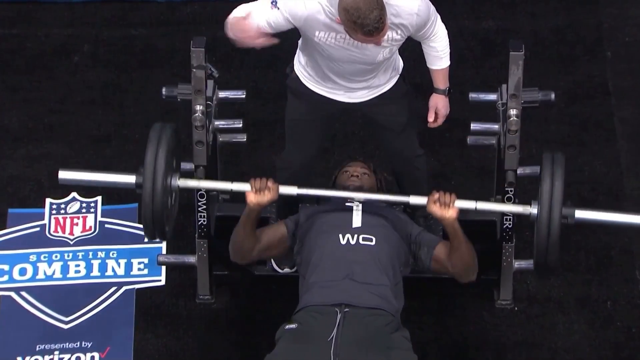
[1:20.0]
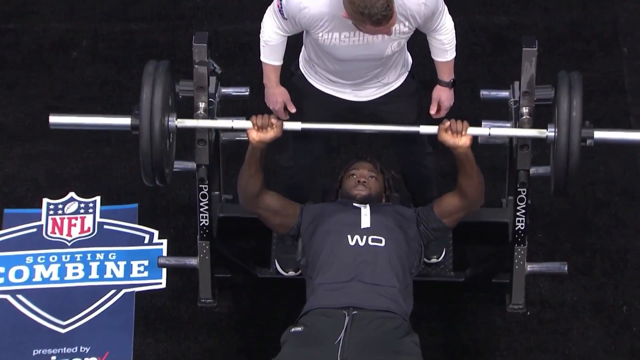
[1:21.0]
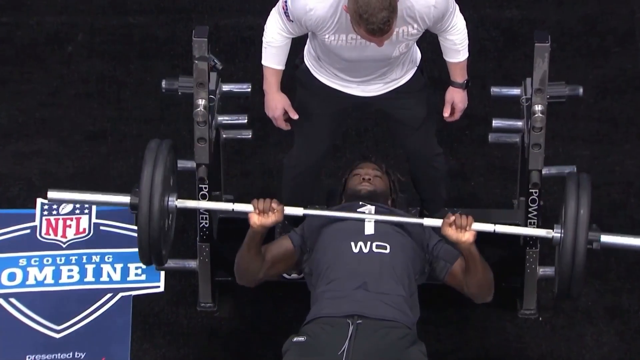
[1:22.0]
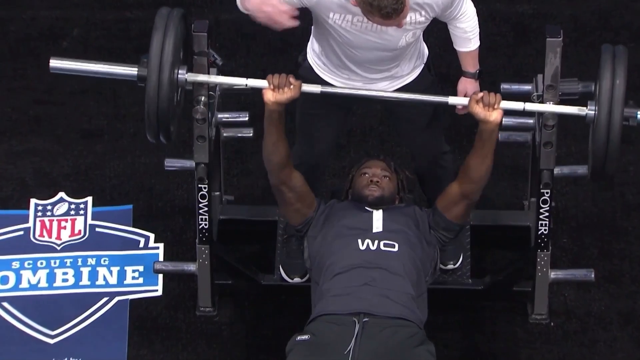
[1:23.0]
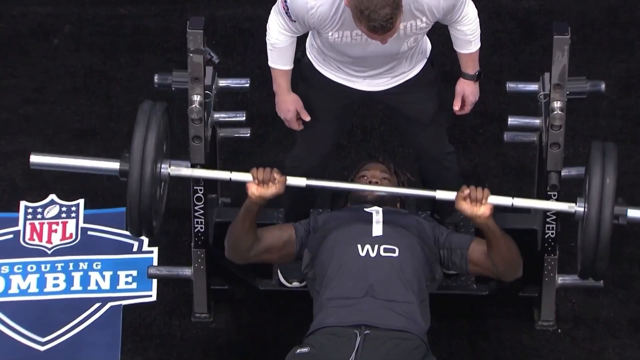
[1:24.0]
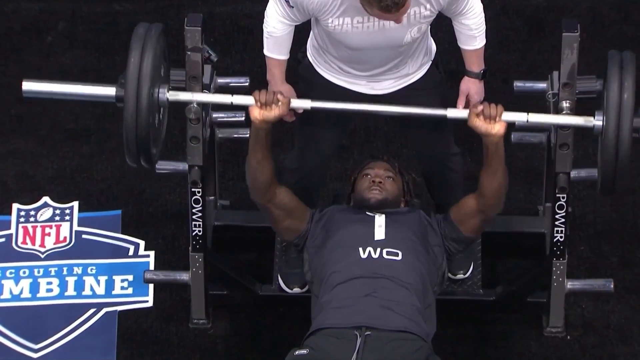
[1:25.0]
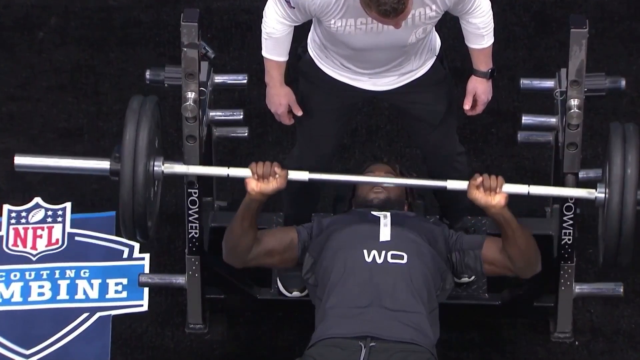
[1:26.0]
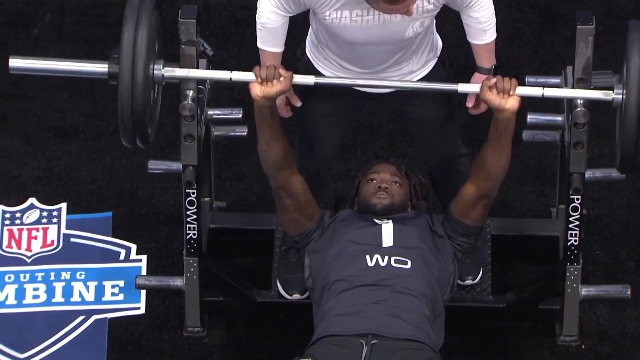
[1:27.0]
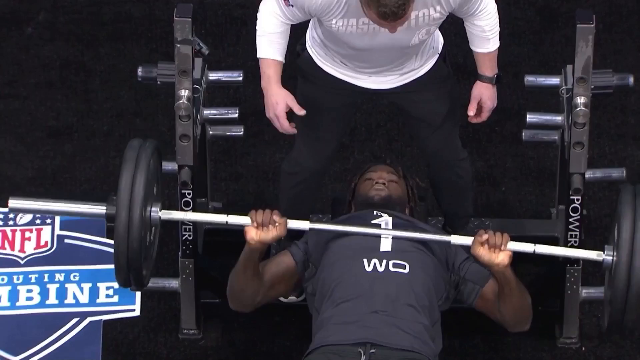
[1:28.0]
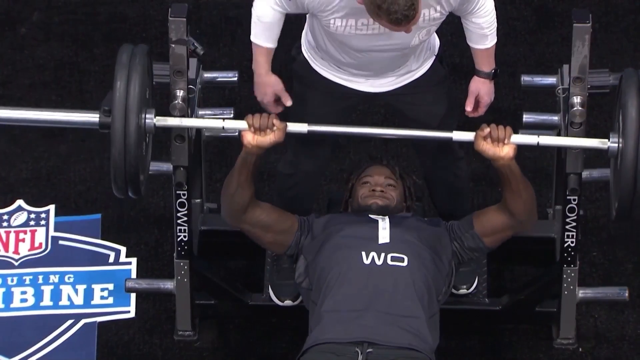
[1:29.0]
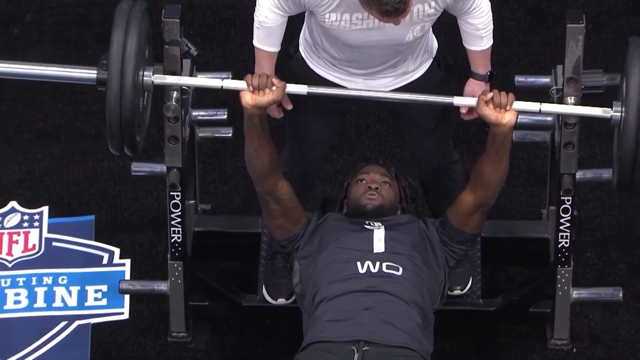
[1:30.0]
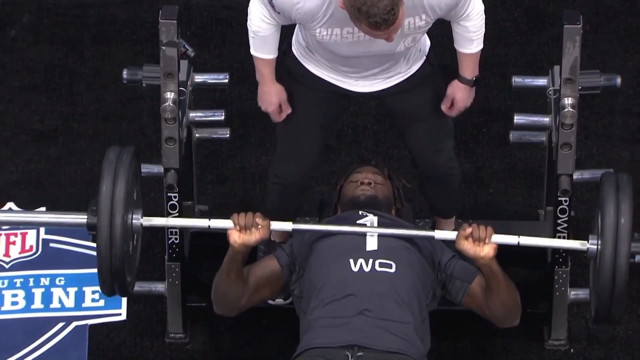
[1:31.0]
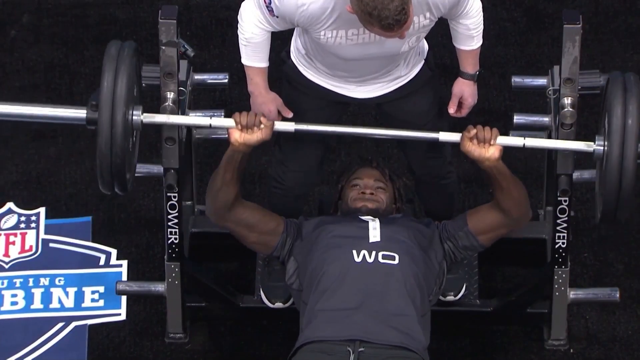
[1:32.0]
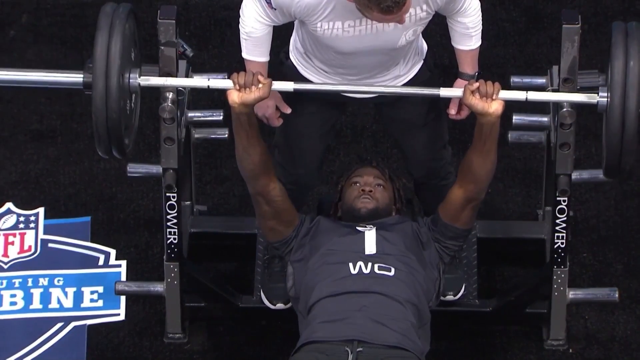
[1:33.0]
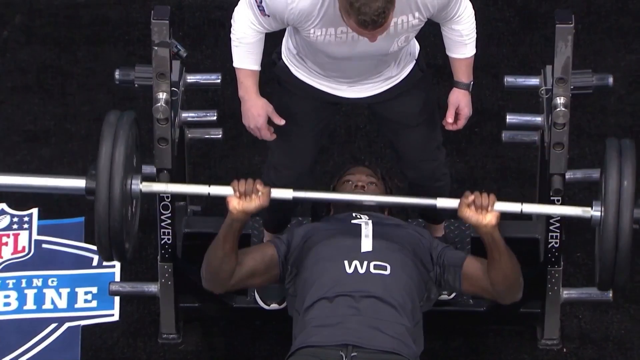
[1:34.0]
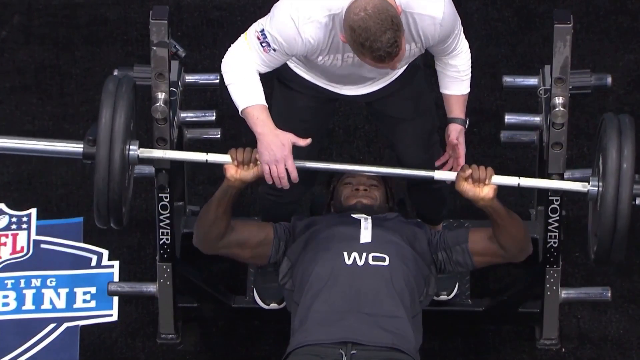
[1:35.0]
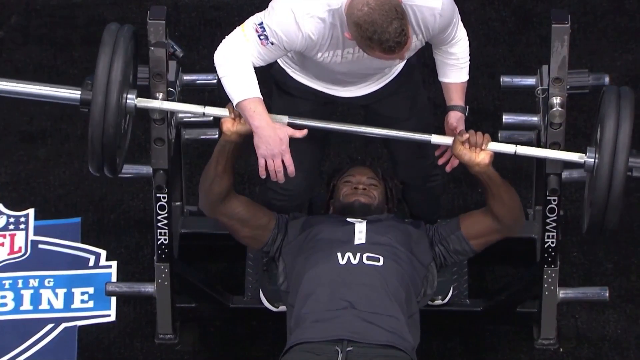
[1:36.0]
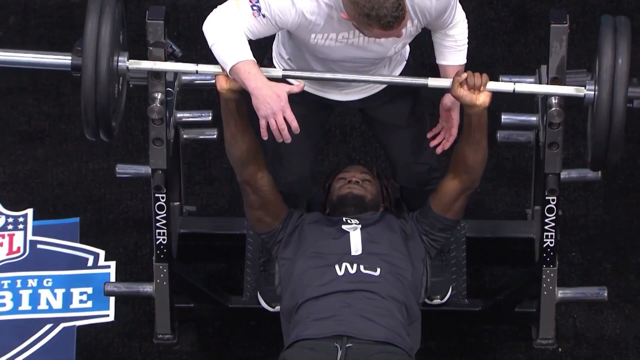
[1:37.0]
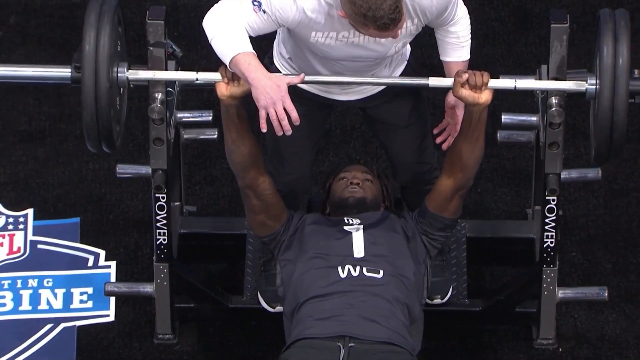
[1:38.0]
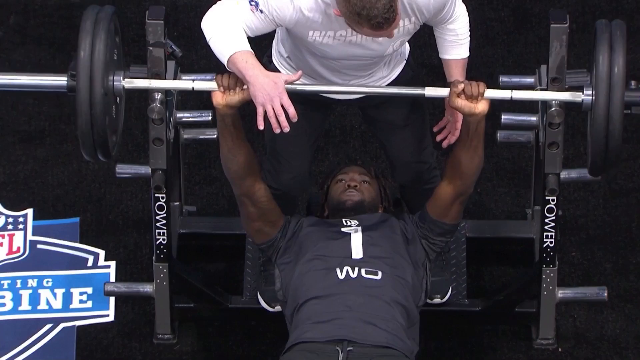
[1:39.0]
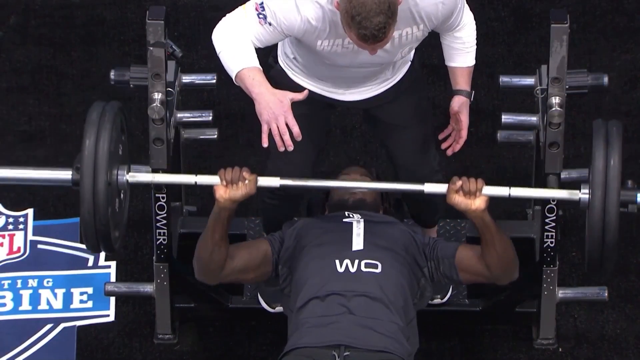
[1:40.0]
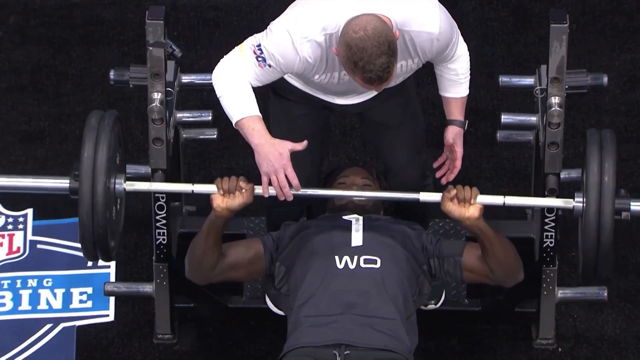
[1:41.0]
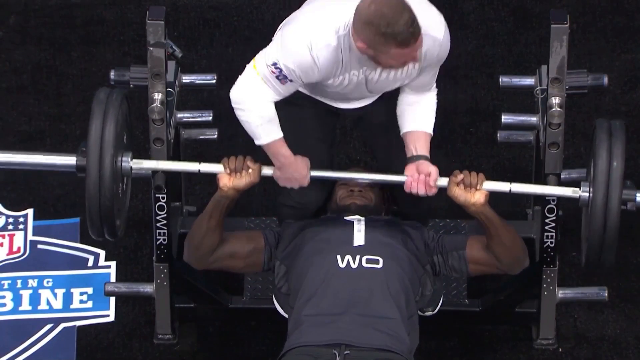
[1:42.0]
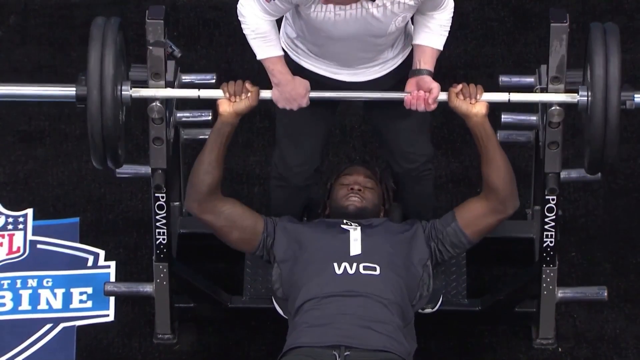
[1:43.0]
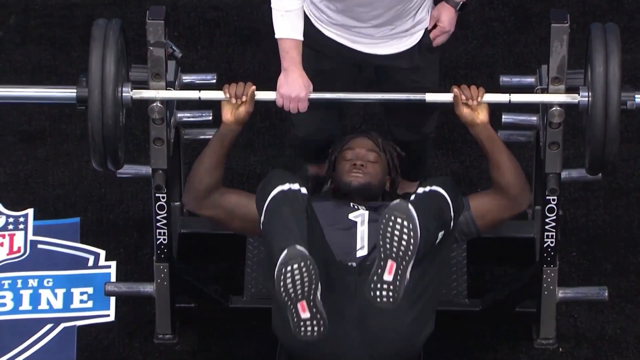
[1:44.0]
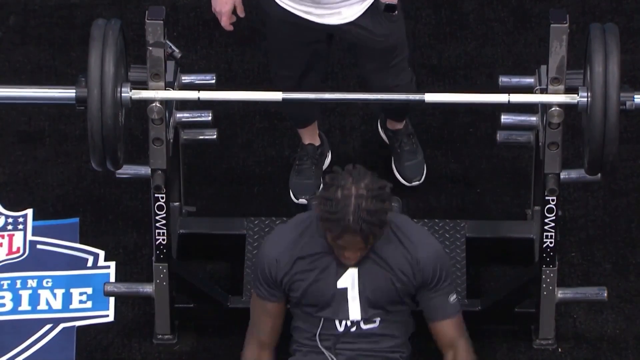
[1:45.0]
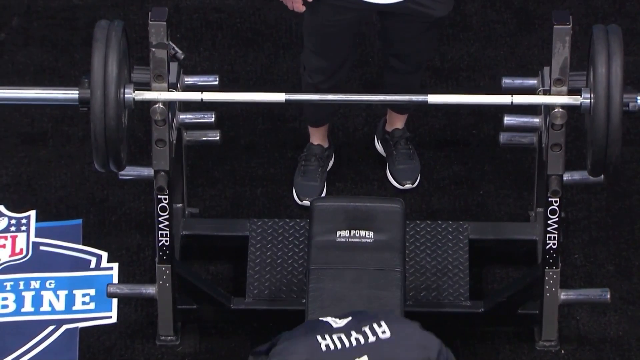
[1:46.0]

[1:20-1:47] A man lies on a weight bench holding the barbell, lifting the weights up above his body. The bar comes down and he lifts it back up, repeating the same move over and over. He lifts the weights by himself until the very last rep, when he cannot push it all the way up; the coach standing behind him grabs the bar and helps him lift it up and set it into the bar holder on the back of the weight bench. In the lower left of the screen is the NFL logo, and below it the text "Scouting Combine".